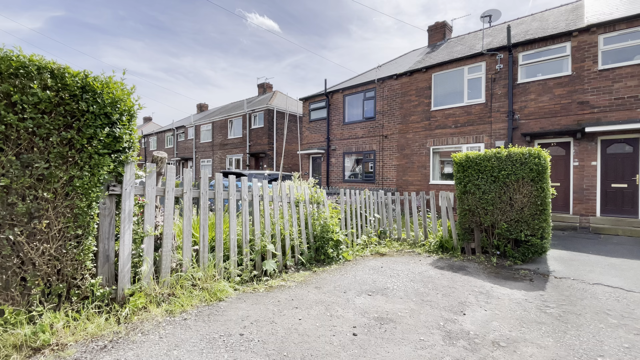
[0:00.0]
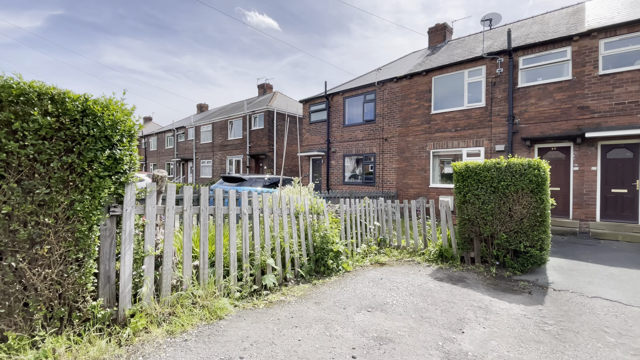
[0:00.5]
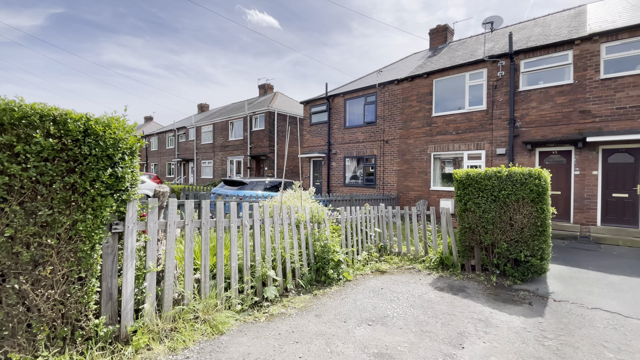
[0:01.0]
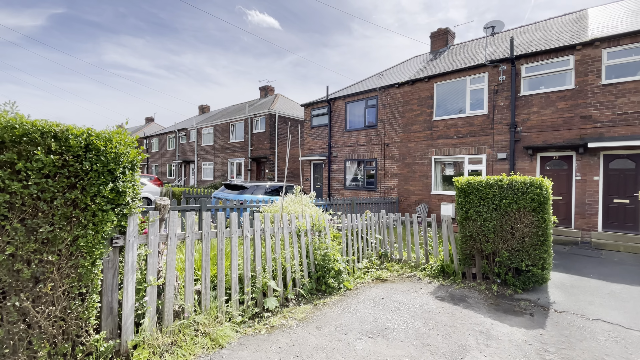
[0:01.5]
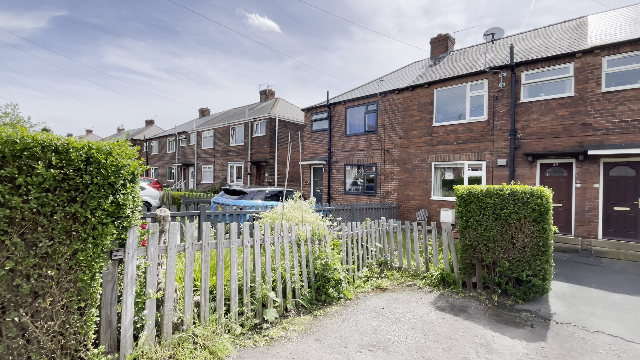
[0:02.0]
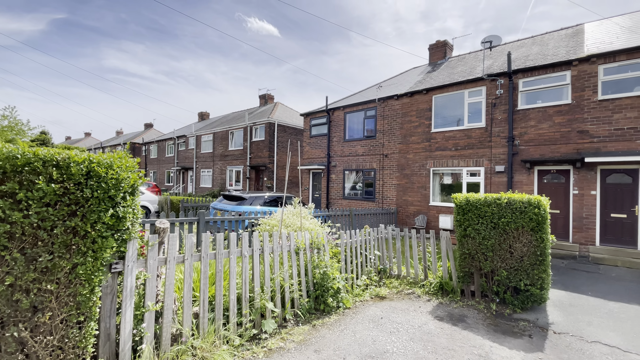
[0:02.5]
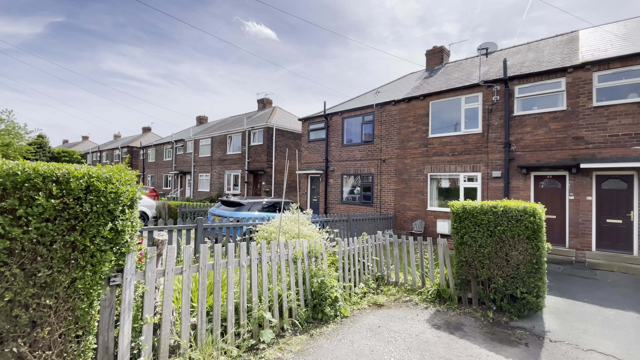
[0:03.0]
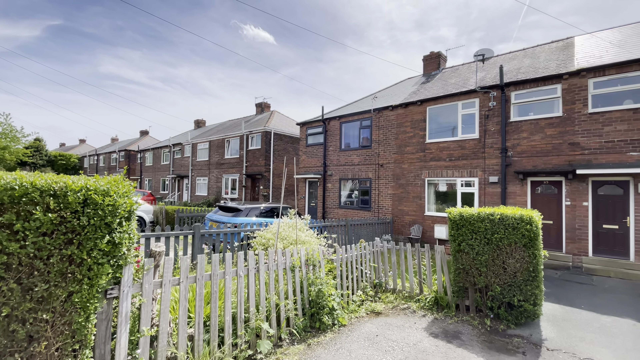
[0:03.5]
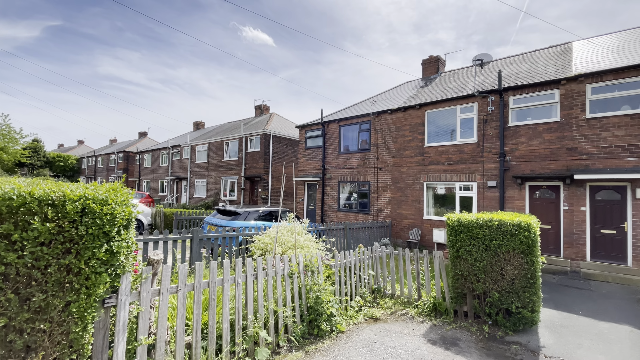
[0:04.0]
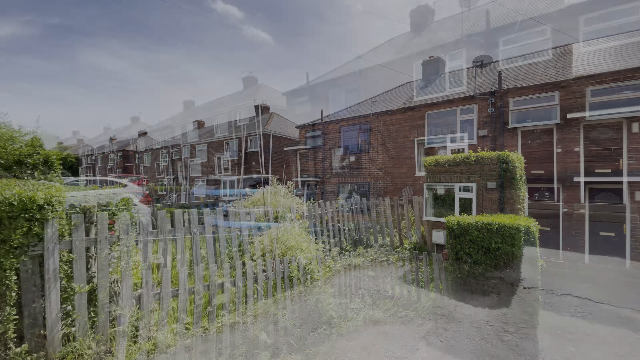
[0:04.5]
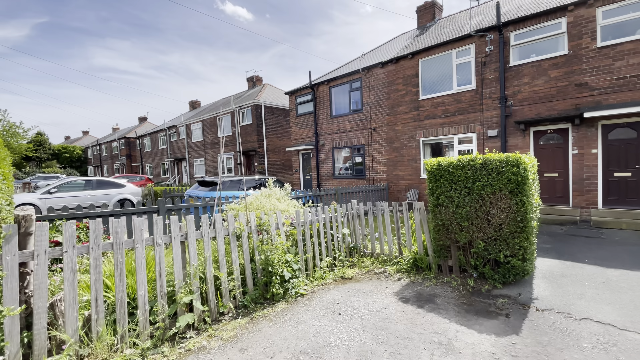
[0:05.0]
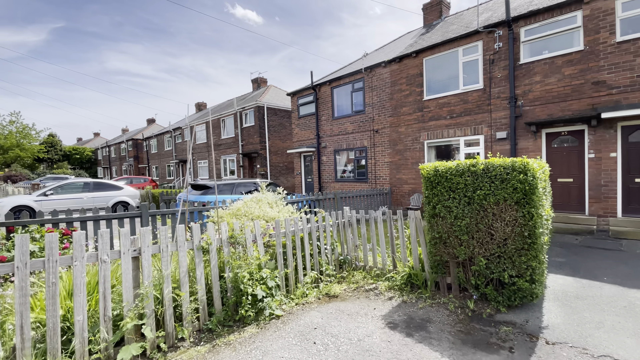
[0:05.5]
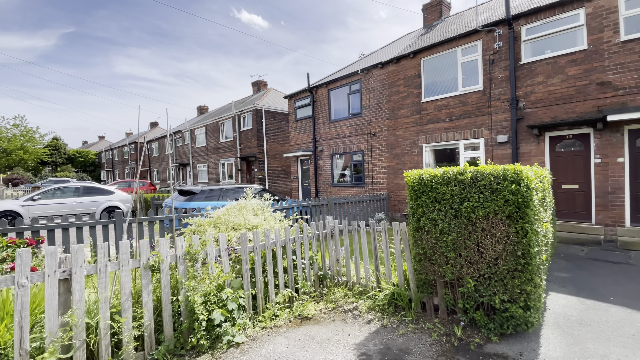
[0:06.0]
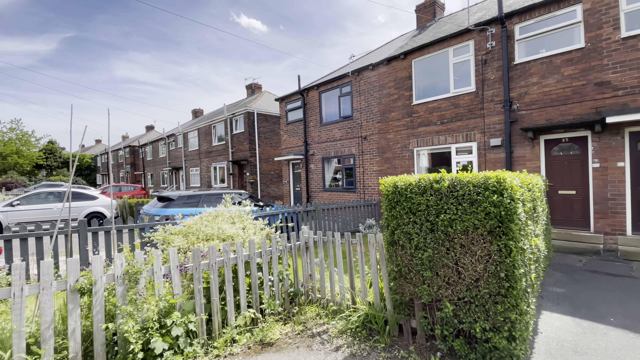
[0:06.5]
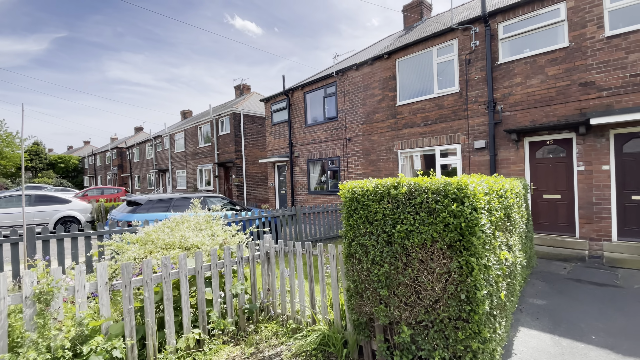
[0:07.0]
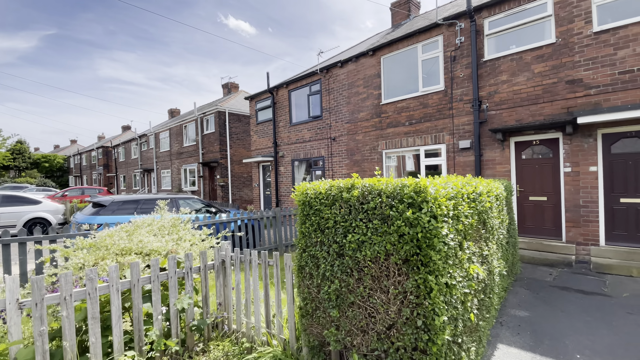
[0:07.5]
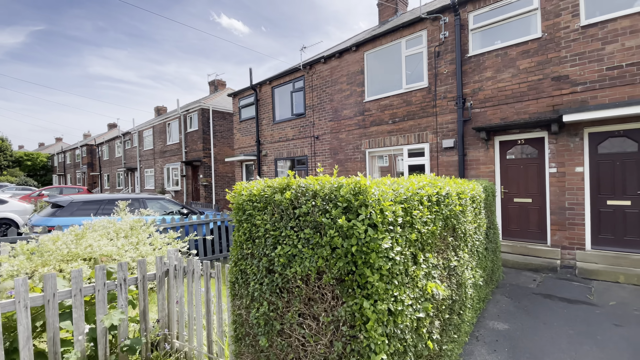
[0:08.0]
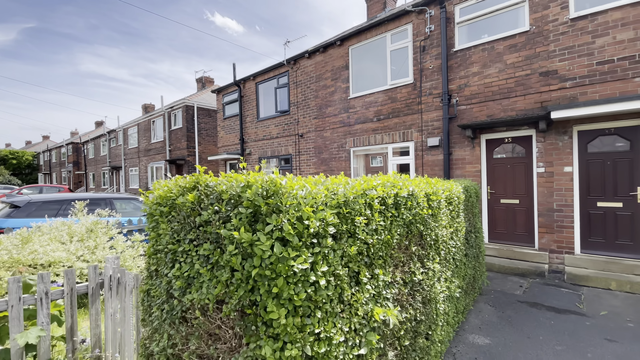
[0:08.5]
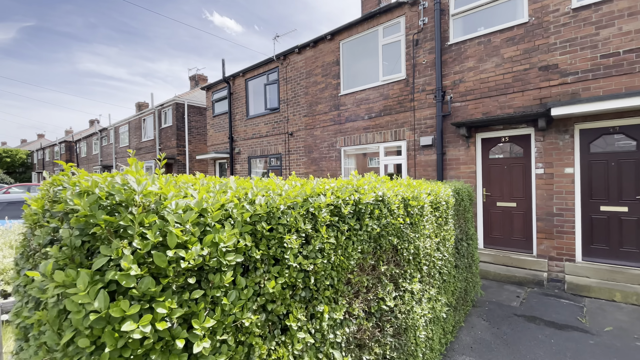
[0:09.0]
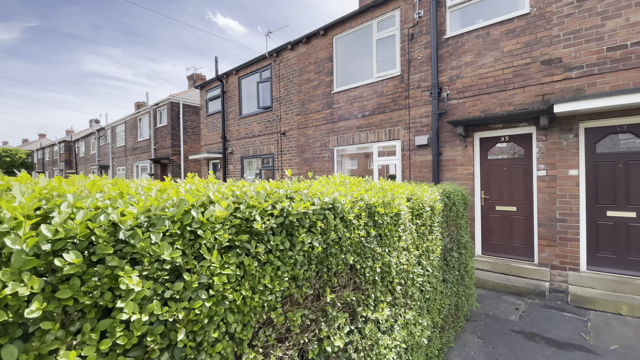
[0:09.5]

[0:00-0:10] The video opens on the outer face of what looks like a low, sprawled-out apartment complex made of brick. There is a wooden fence with some bushes flanking it, and the bushes have been trimmed into a square shape. The camera pans up slowly in a smooth motion and moves toward the apartment building as somebody walks up toward the door of one of the apartments. The second floor of the complex has glass windows, and the outside wood of the windows is dark brown in some places and white in others. Each of the doors has a gold mailbox slot and a gold handle. It is a sunny day; the ground is gravel near the fence and smooth slate near the apartment complex.